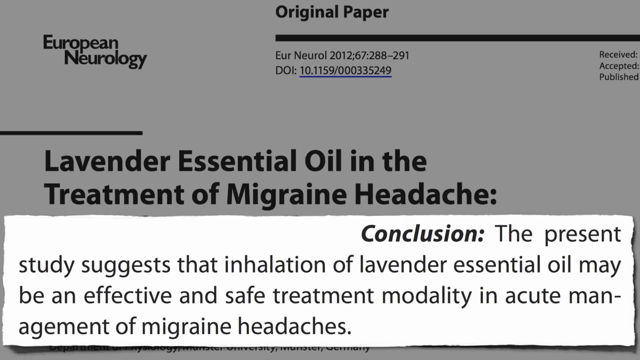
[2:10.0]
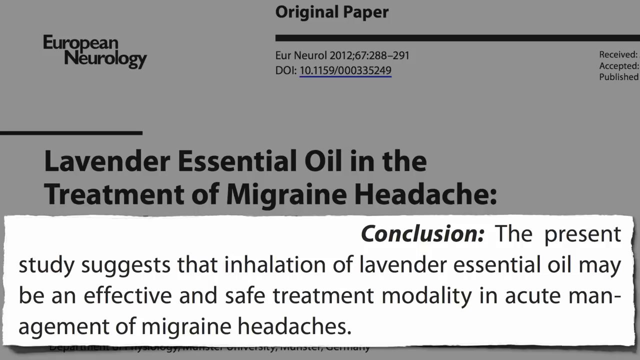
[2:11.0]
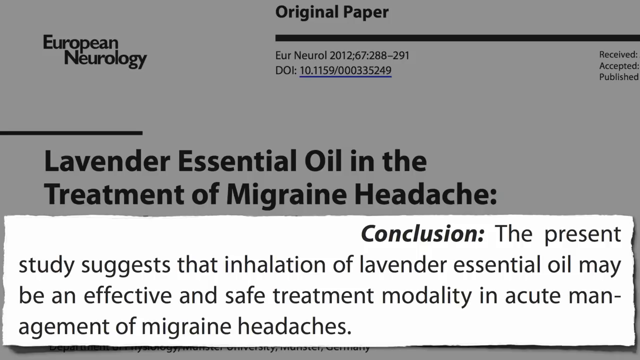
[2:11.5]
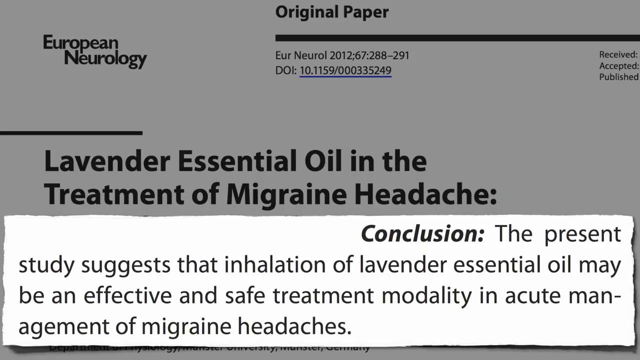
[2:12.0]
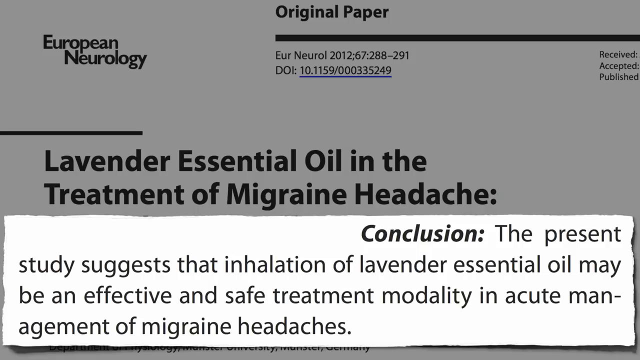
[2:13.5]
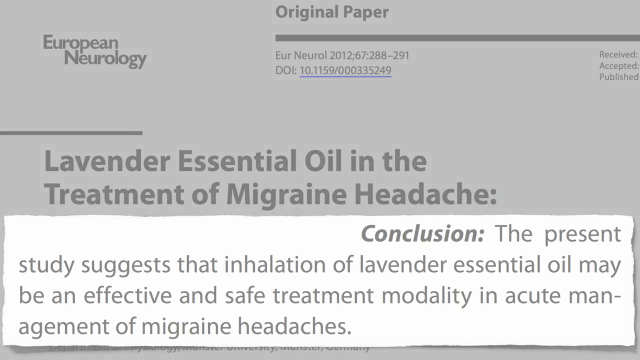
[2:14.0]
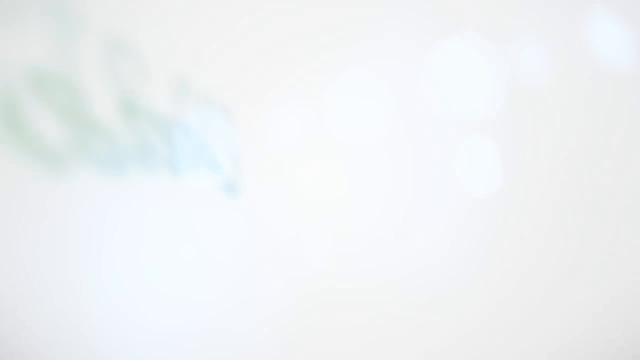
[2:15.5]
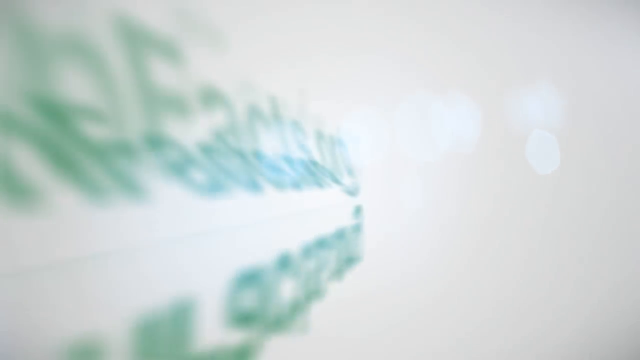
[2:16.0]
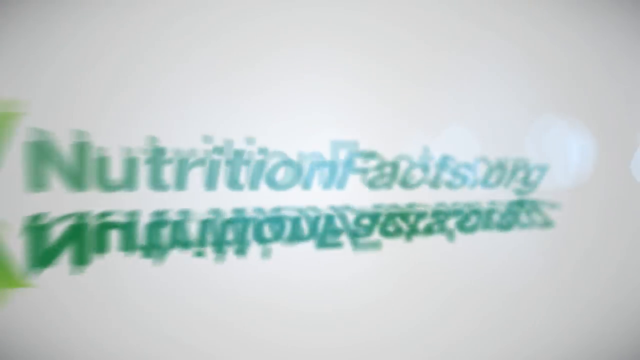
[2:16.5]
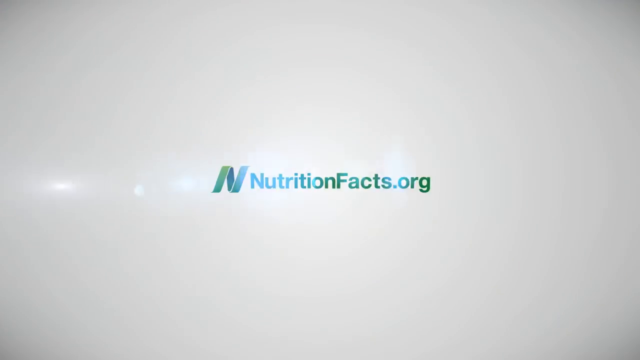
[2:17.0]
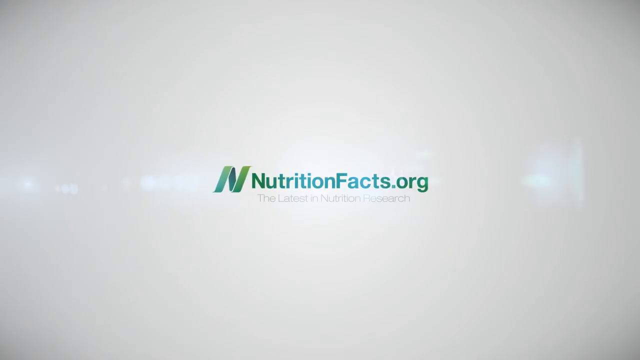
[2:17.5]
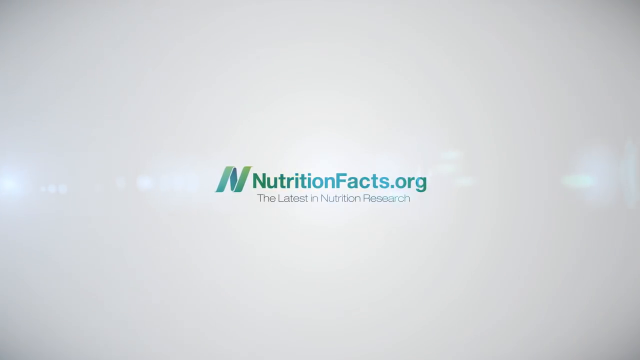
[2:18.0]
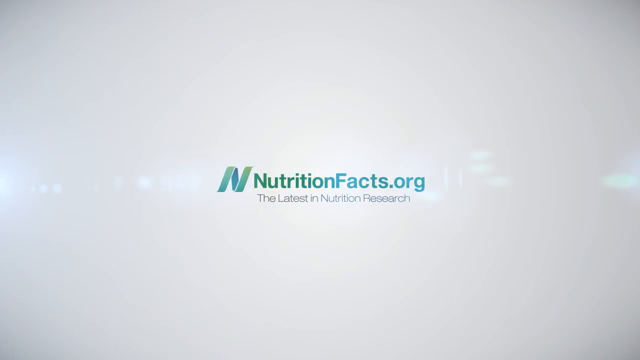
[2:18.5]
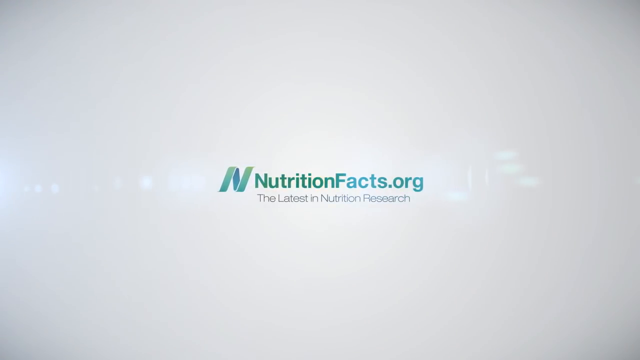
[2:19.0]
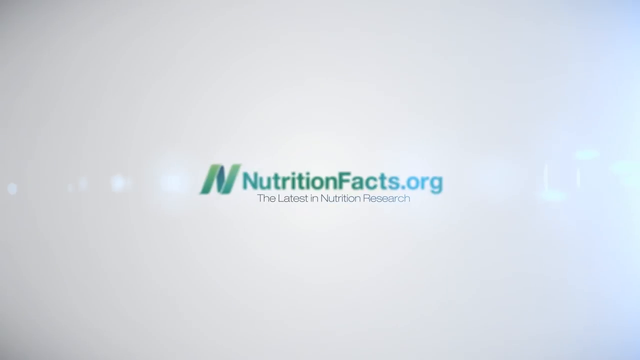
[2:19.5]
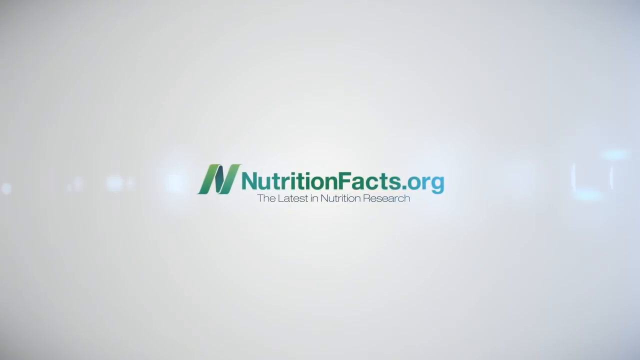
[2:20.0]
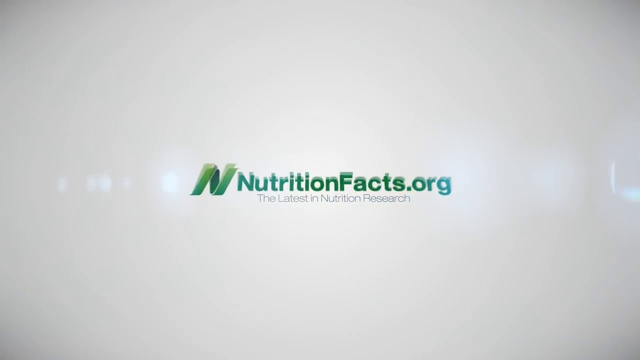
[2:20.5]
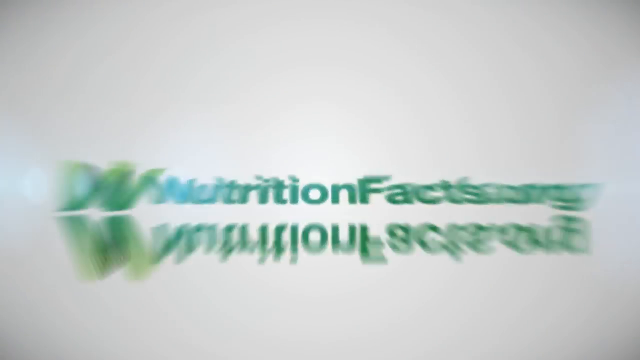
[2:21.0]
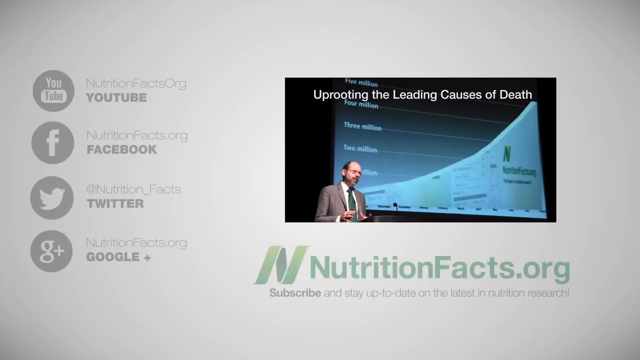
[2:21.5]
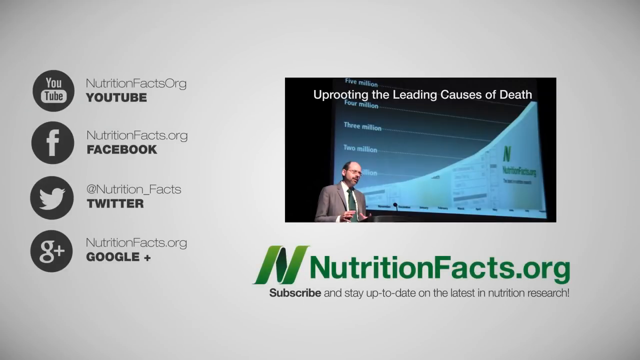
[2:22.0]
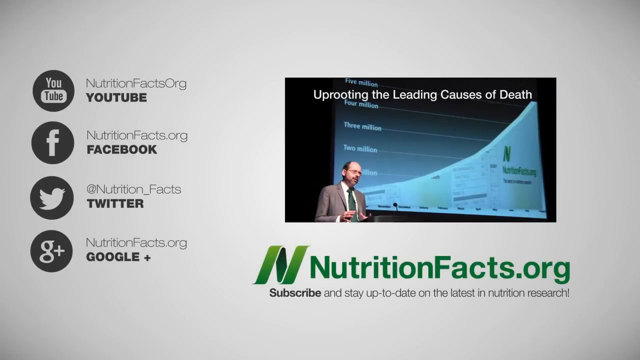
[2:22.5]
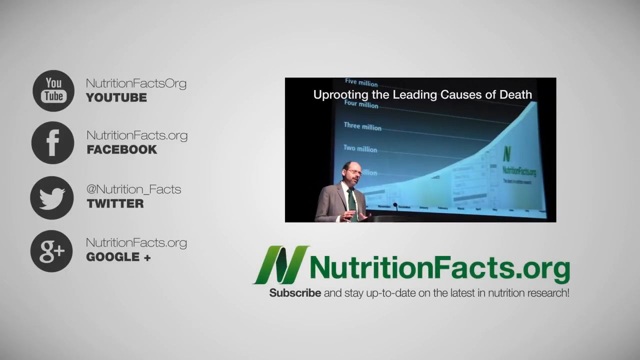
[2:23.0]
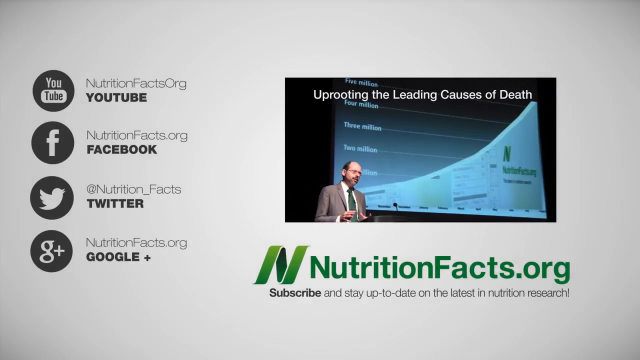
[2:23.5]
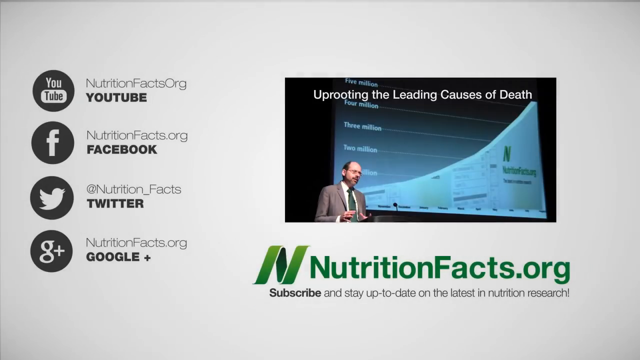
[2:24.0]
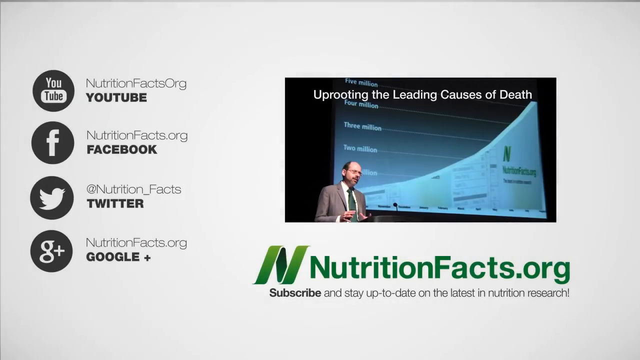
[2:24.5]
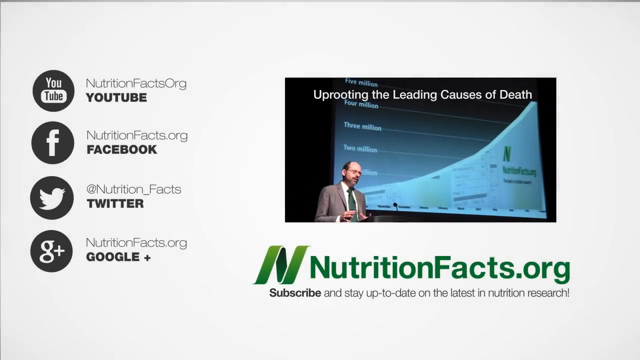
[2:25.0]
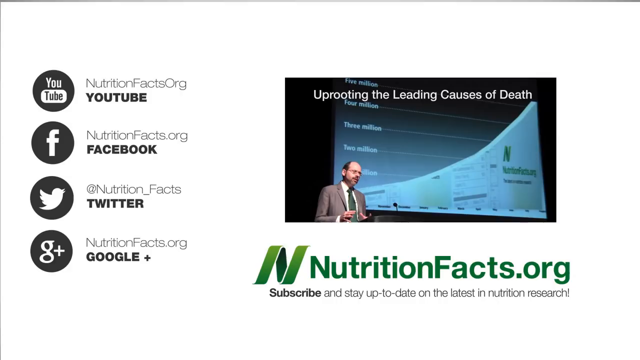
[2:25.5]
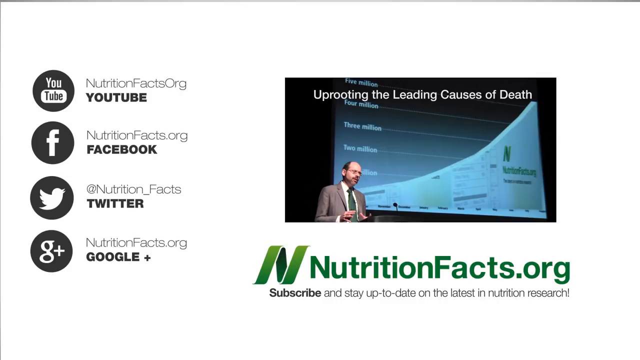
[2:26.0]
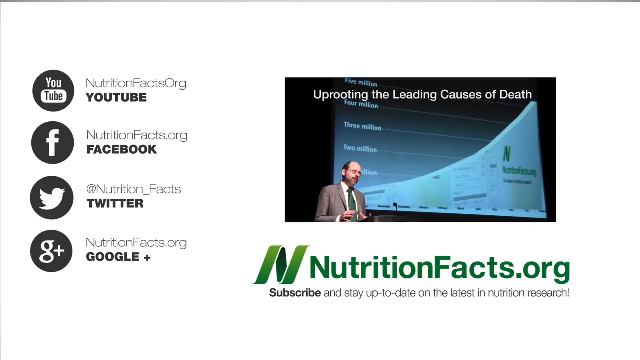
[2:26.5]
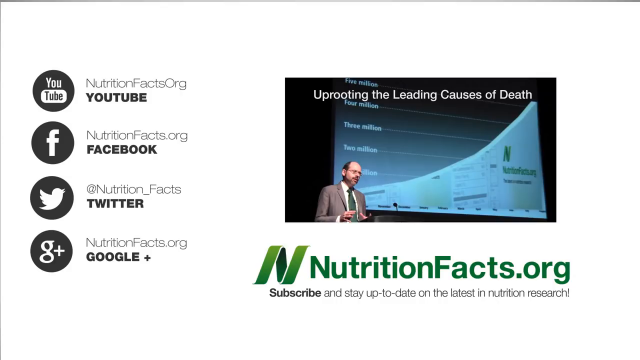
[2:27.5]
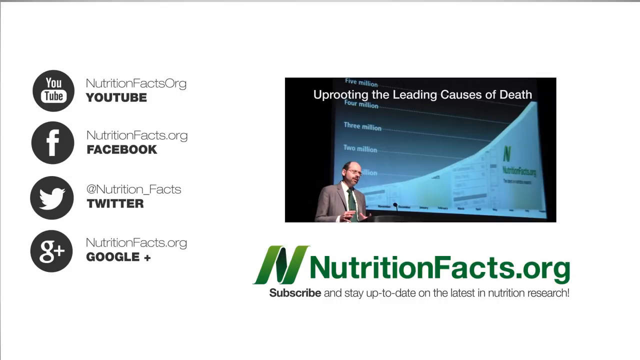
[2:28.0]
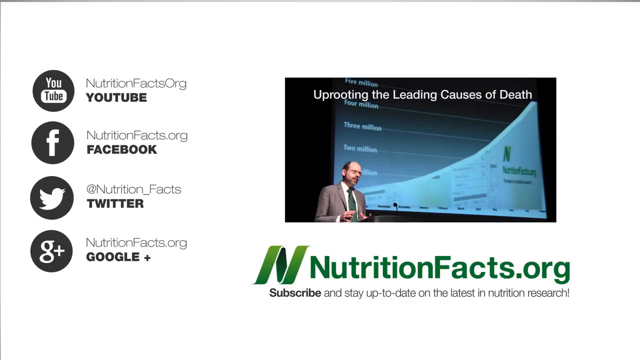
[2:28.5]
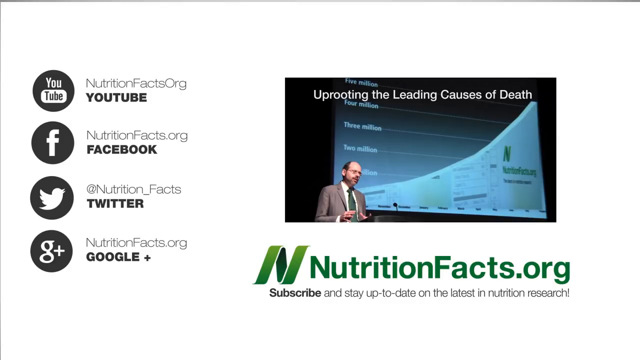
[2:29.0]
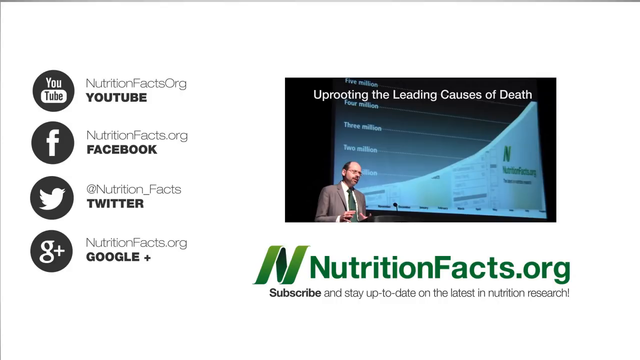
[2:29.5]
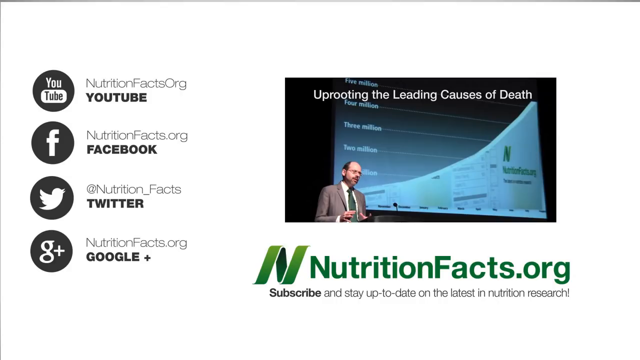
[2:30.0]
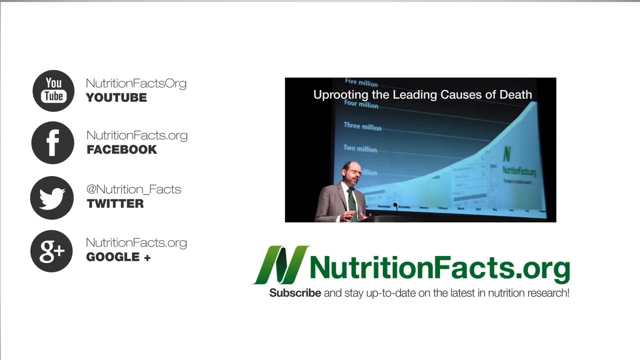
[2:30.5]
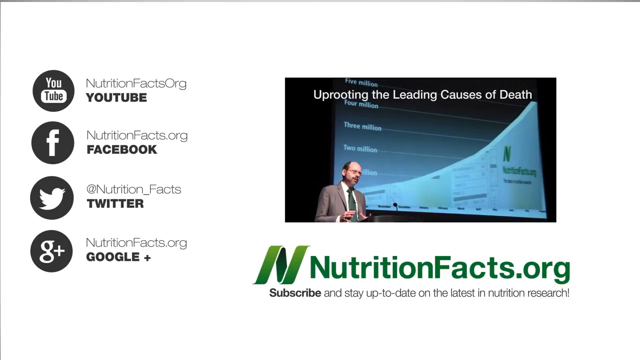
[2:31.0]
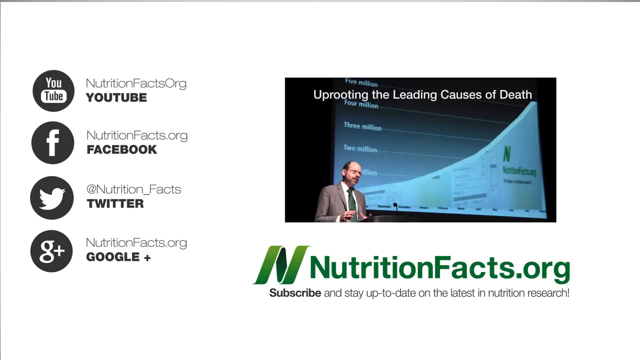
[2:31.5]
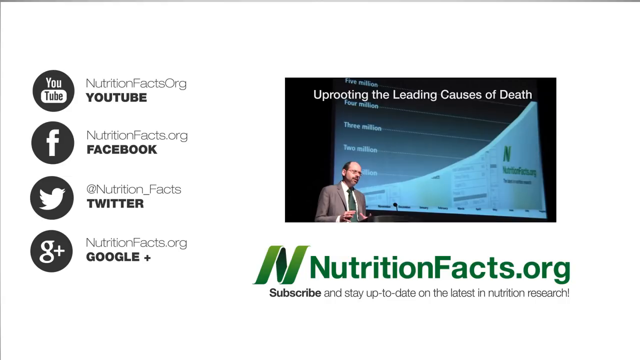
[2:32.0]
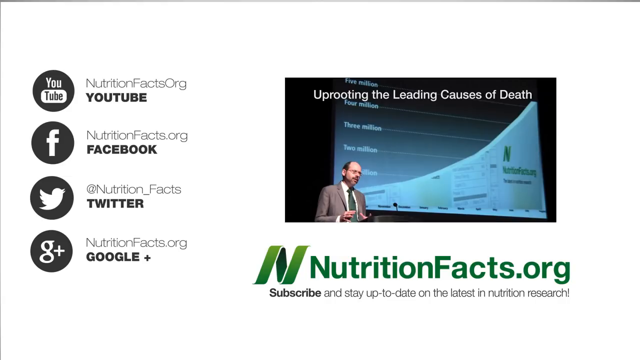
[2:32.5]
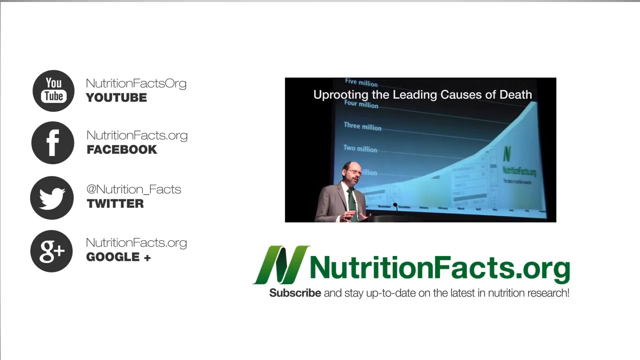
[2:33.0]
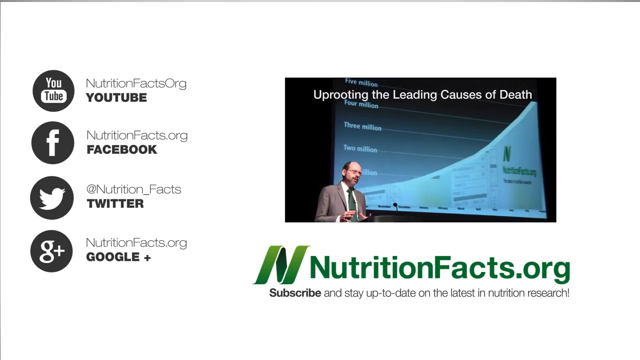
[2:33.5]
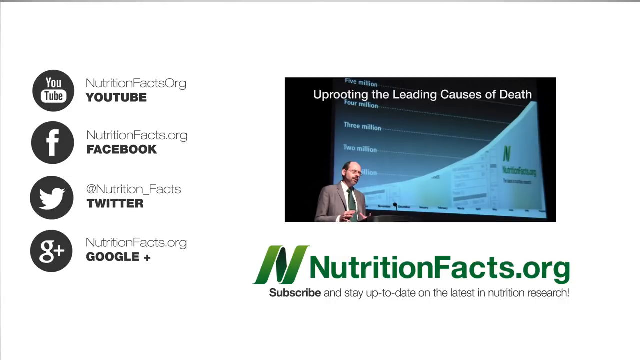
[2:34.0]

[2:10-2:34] The conclusion is on screen, and then the nutritionfacts.org logo appears on the screen again. The screen looks almost as if there may be some light or reflection coming from the logo and moving outwards to the left and the right, and the logo moves around quite quickly, then flies at the camera before disappearing. Next comes a light grey screen with the nutritionfacts.org logo at the bottom right-hand side; above it is a screenshot of what appears to be a video titled "uprooting the leading causes of death". Down the left-hand side are the YouTube, Facebook, Twitter and Google plus accounts for nutritionfacts.org, along with a message that subscribing lets you stay up to date with the latest in nutrition research. The video stays on this screen for some time.